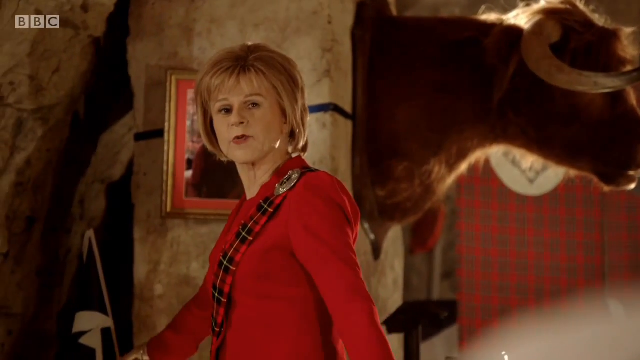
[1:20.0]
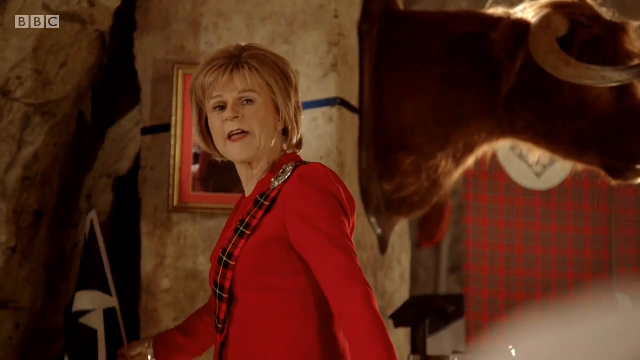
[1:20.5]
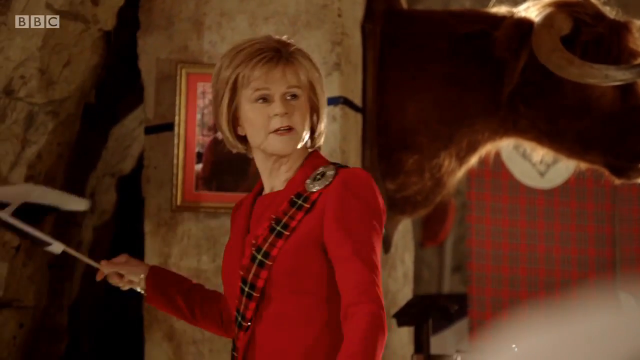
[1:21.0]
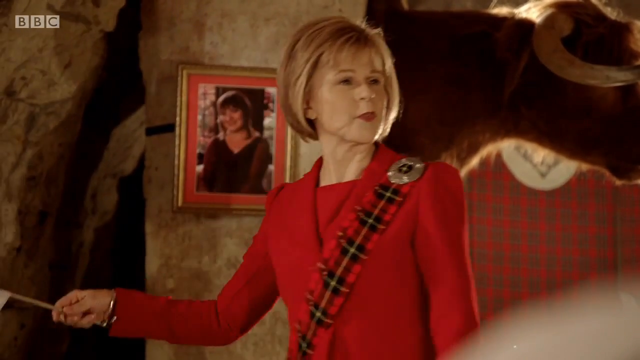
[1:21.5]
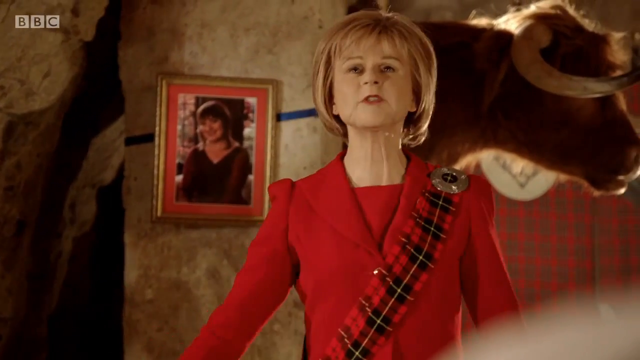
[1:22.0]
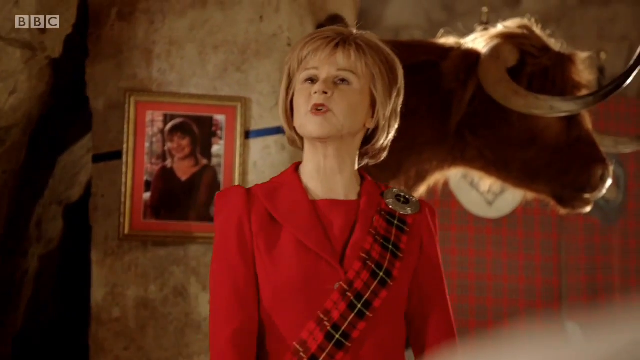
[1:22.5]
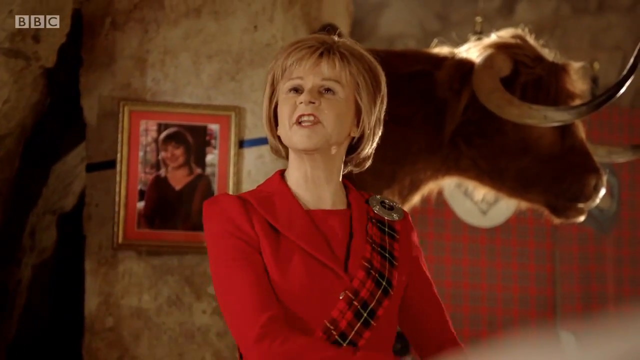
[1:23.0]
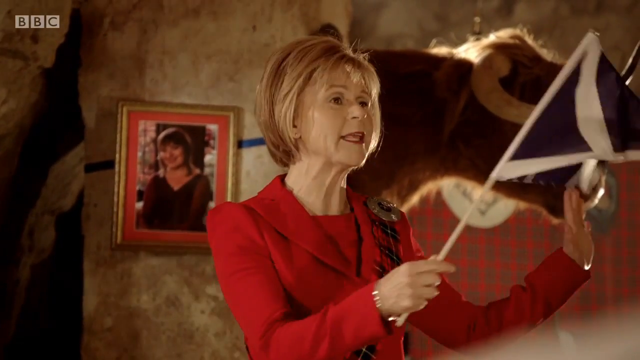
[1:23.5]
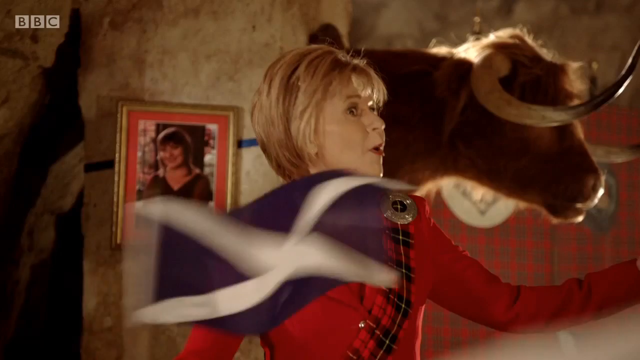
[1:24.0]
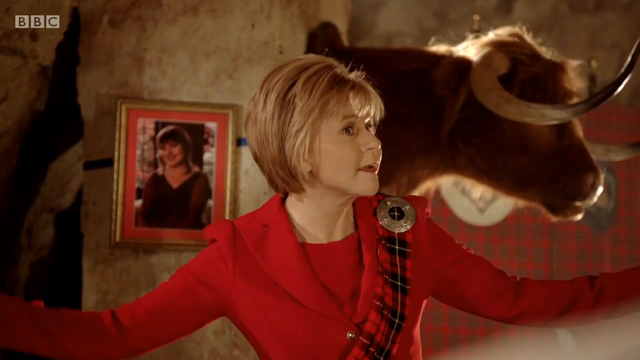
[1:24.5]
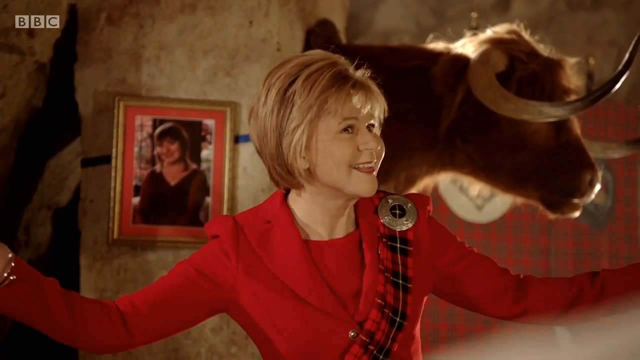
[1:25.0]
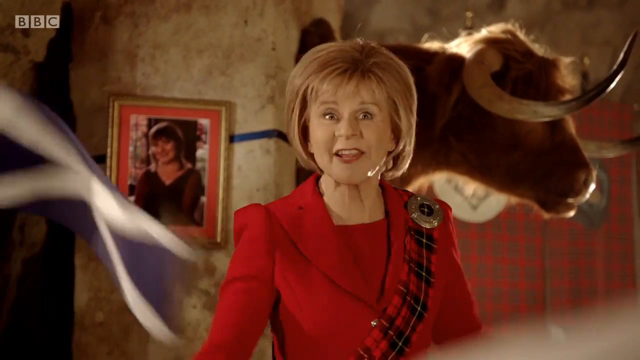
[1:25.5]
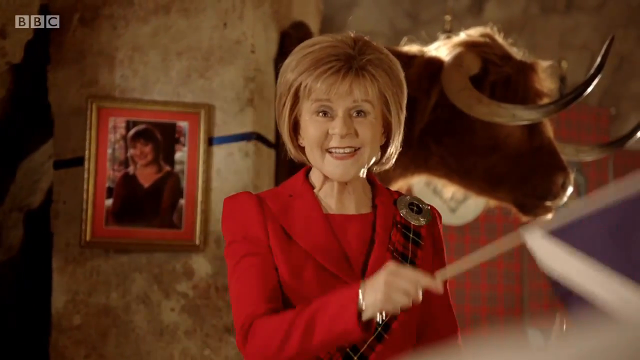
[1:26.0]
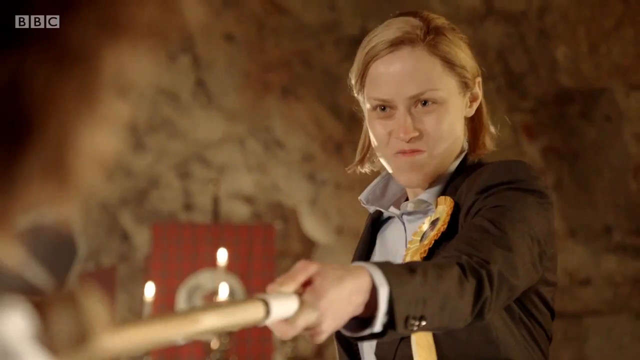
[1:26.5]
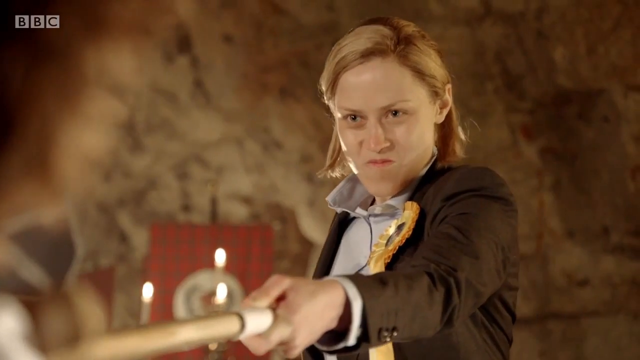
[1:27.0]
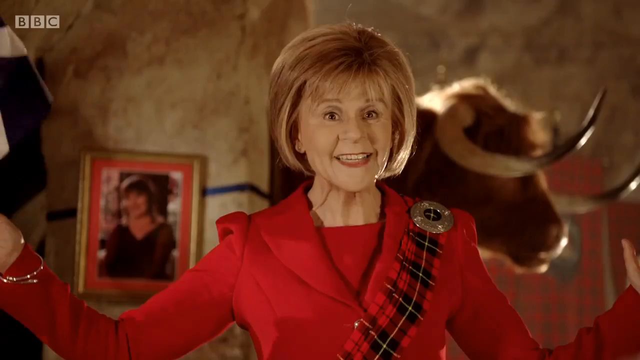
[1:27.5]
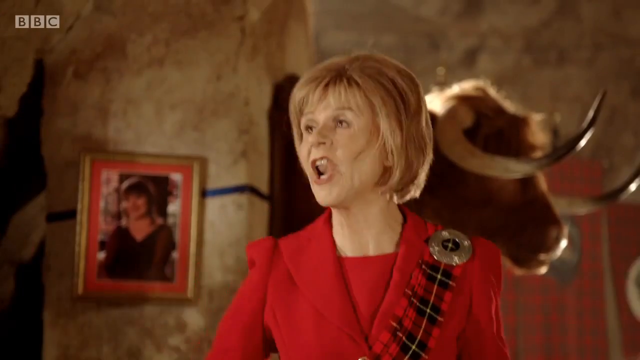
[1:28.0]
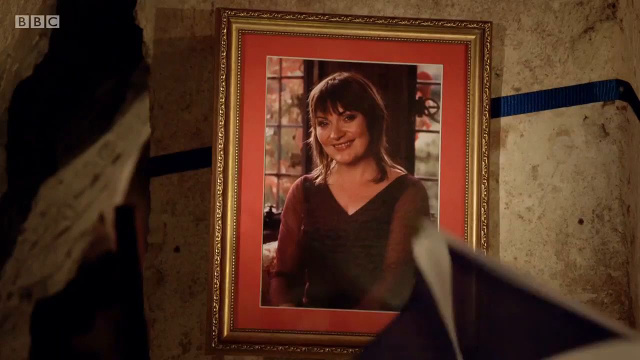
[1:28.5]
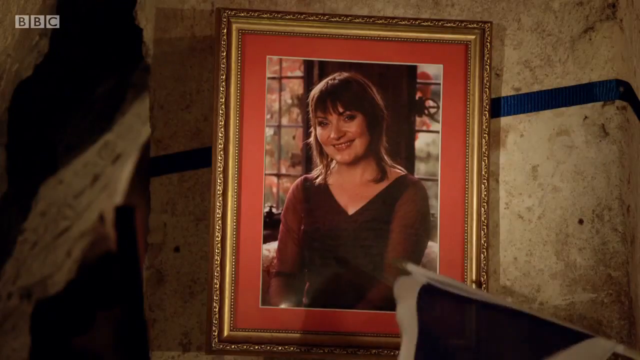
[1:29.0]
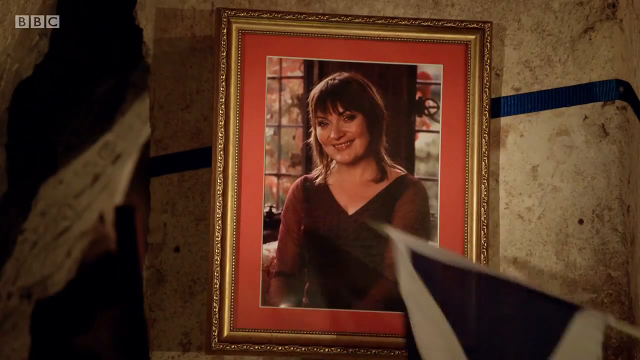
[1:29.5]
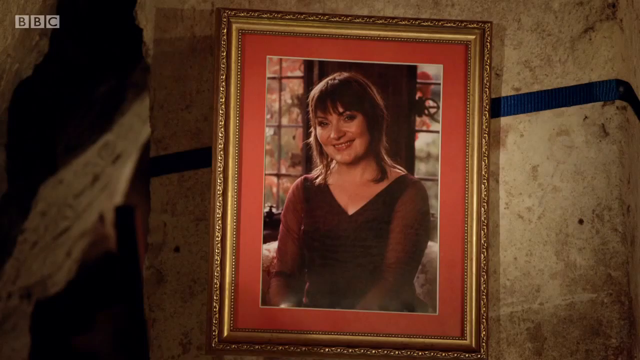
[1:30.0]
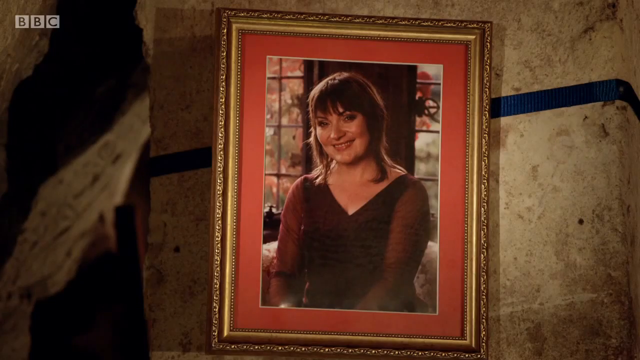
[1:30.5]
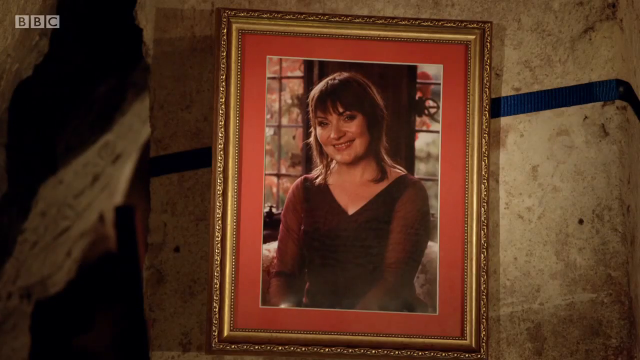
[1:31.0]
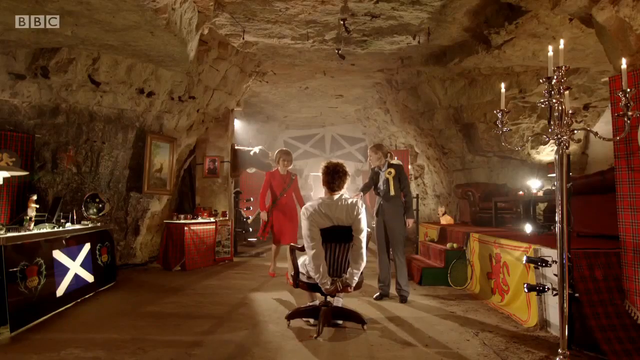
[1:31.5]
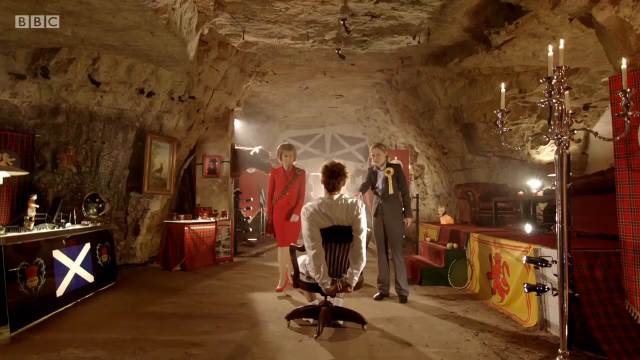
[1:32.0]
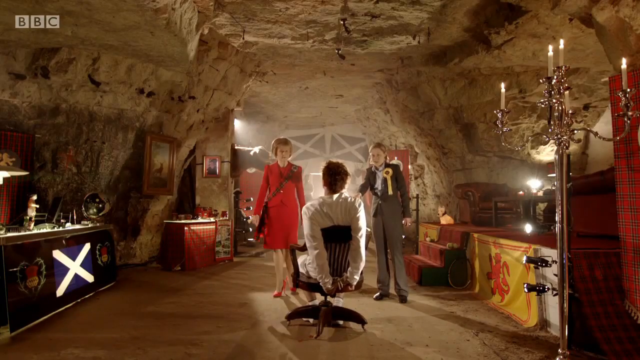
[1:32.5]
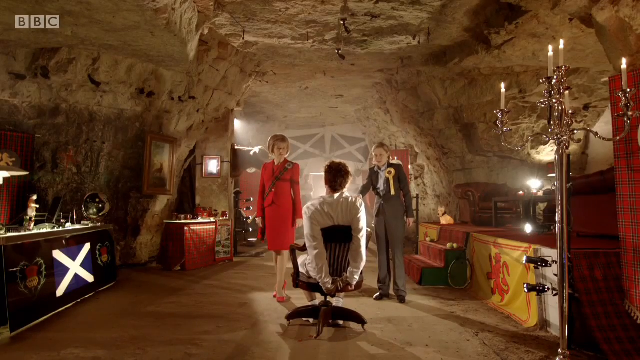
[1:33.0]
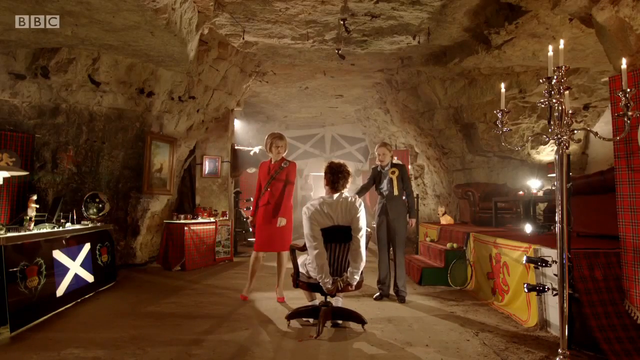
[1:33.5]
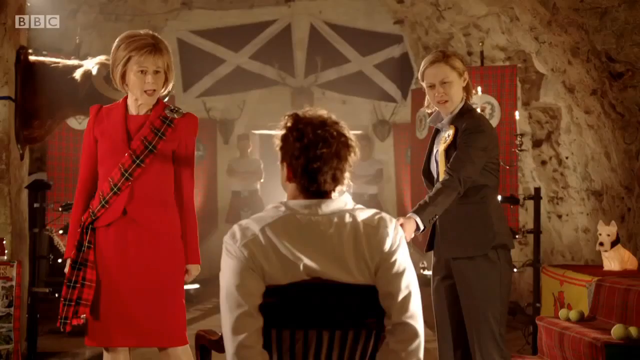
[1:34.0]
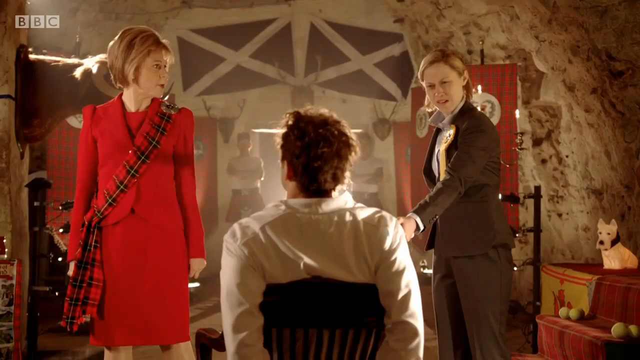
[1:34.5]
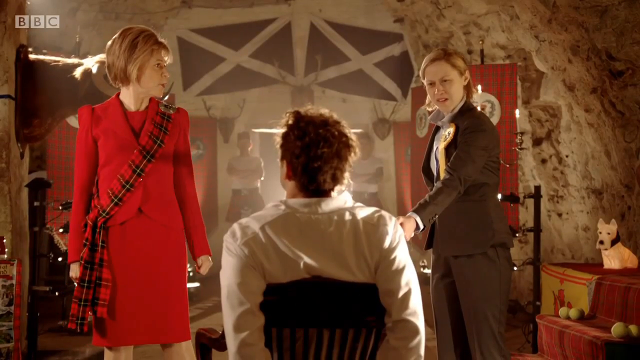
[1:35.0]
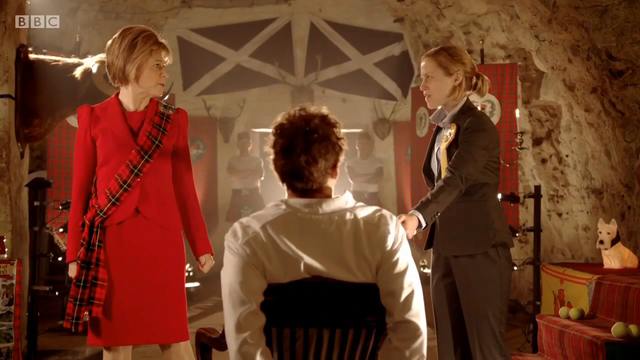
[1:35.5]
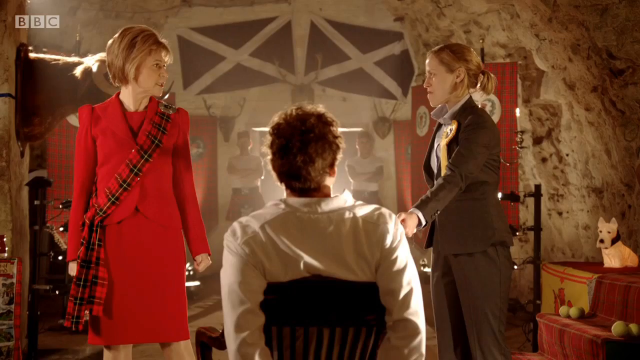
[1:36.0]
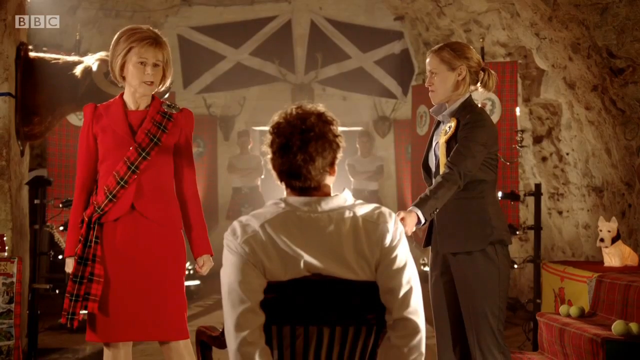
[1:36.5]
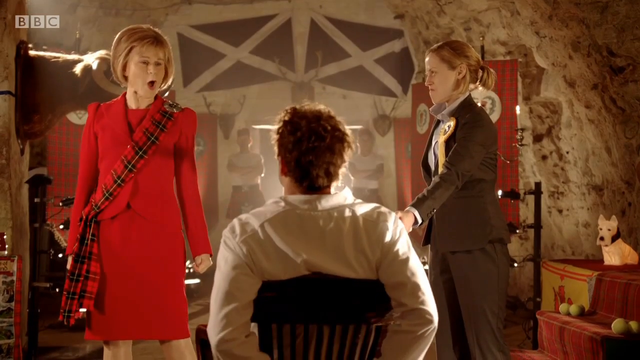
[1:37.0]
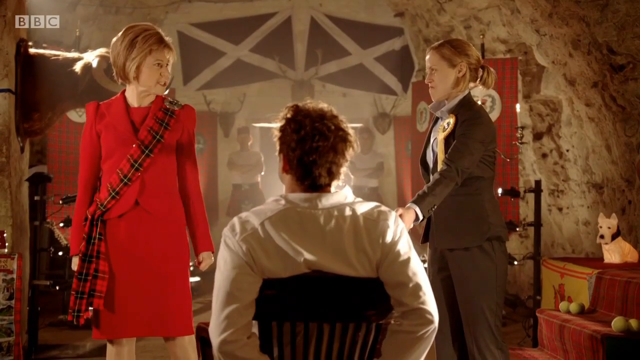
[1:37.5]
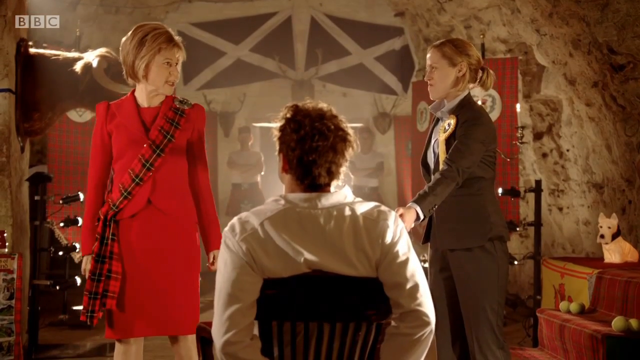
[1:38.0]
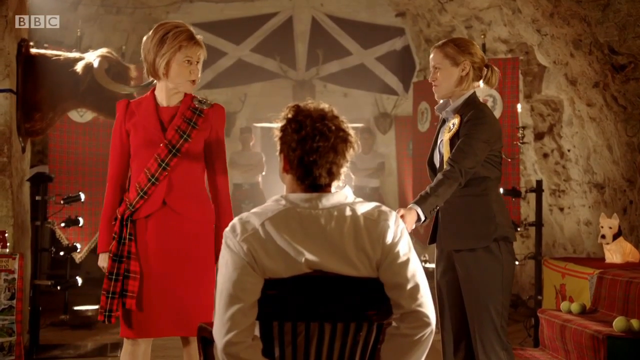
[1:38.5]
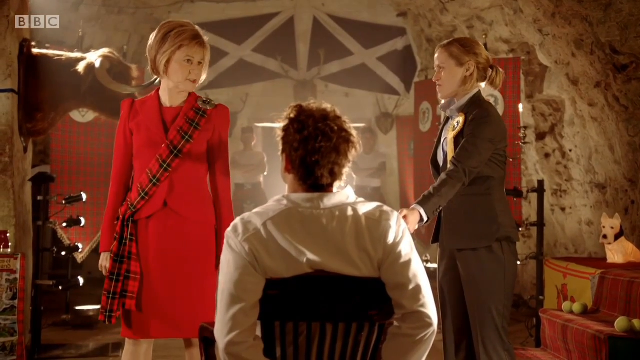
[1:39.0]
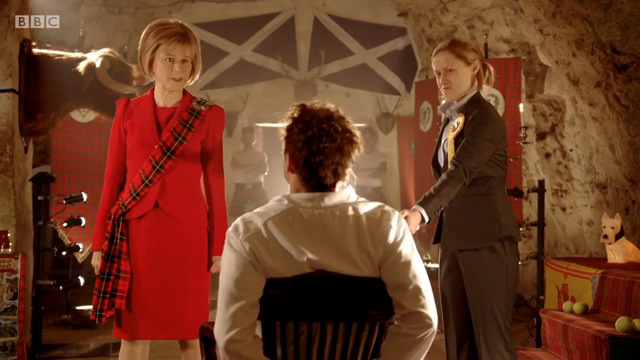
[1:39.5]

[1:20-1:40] A rather close-up shot shows a woman in a red jacket and a red t-shirt moving and gesticulating, waving a blue flag with a white cross in the center in her right hand. Behind her a framed photograph hangs on the wall, and on the right side of the screen, in the background, there is the head of a sort of bison. A second woman is briefly framed pointing a wooden stick at a man's neck; she wears a dark jacket, a light-colored shirt and a yellow bow at chest level. The woman in red is framed again, pointing the flag in her right hand at the framed photograph hanging on the wall, which has a golden frame and a red edge around the photograph. In the last seconds, three people are framed together: the two women and a man in a white shirt sitting tied to a dark chair.